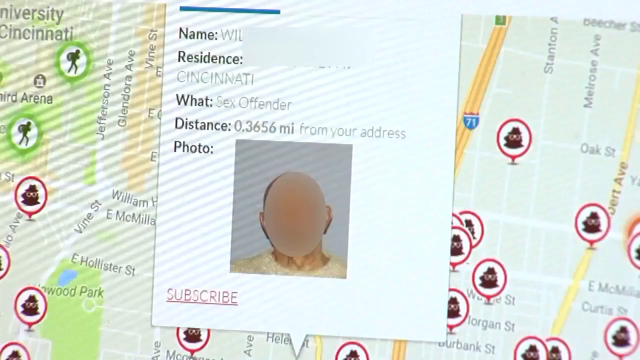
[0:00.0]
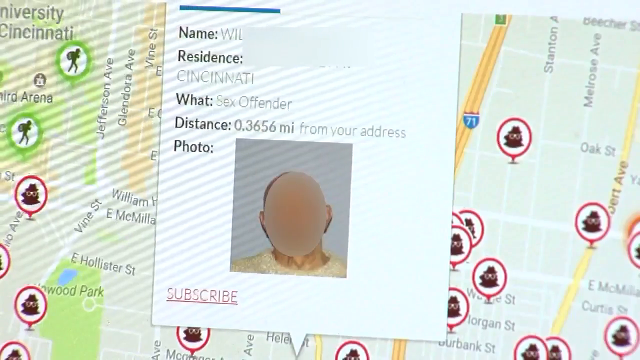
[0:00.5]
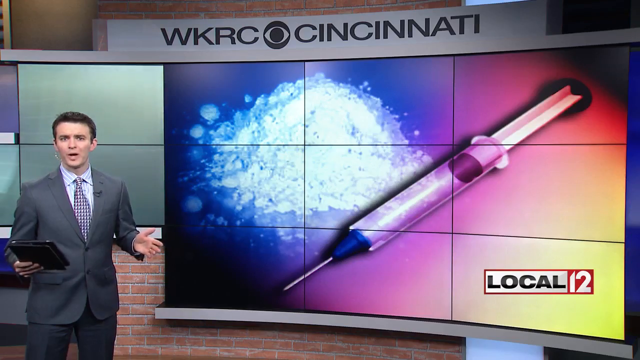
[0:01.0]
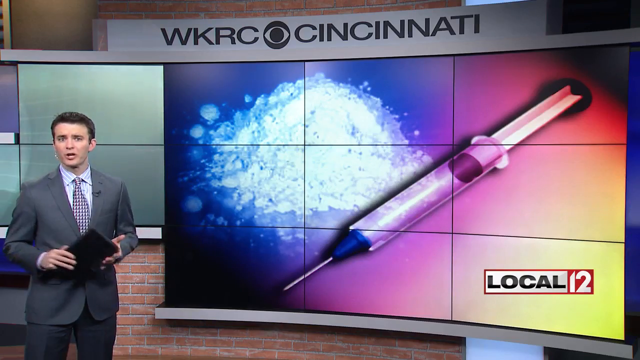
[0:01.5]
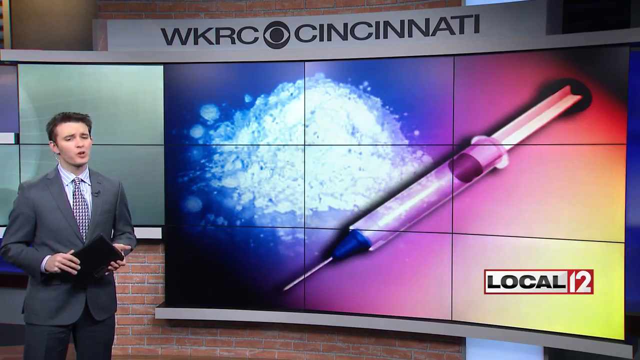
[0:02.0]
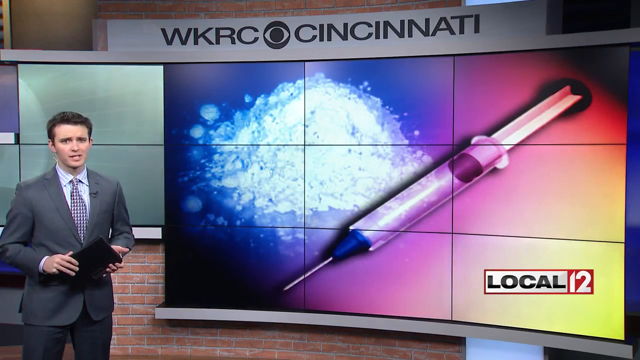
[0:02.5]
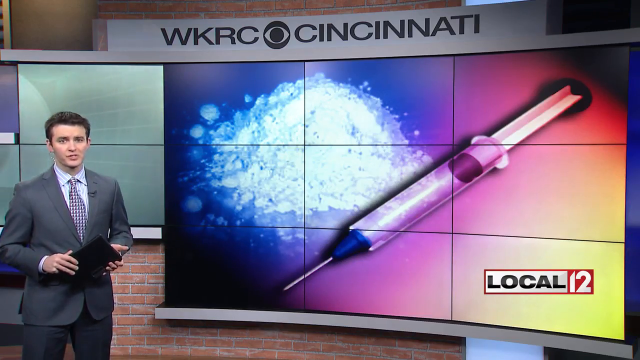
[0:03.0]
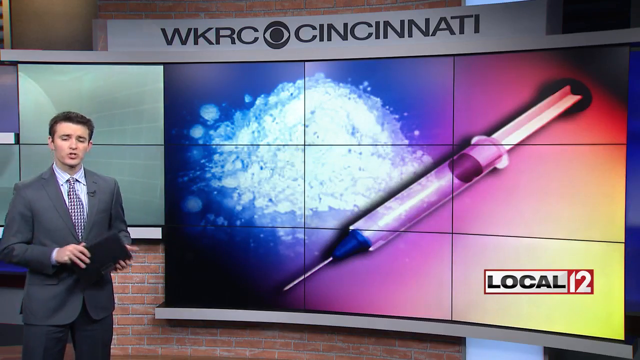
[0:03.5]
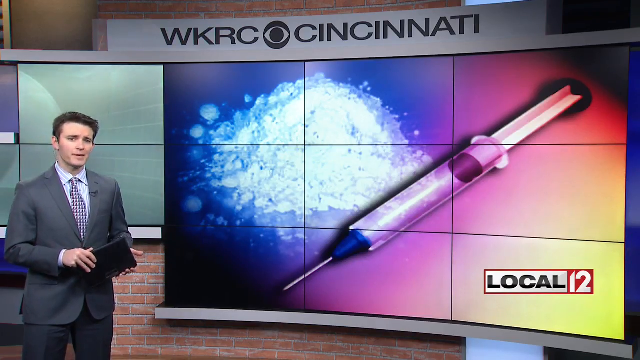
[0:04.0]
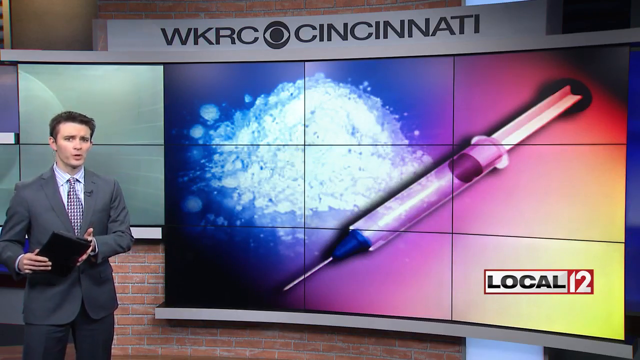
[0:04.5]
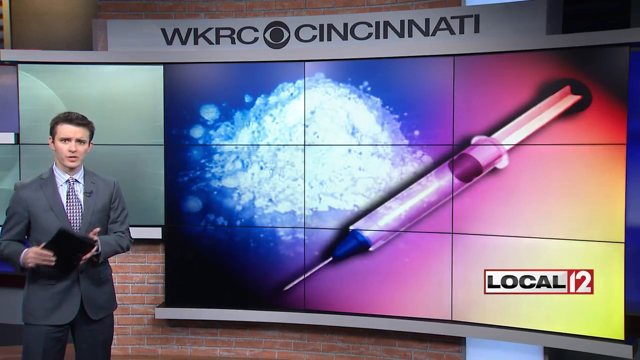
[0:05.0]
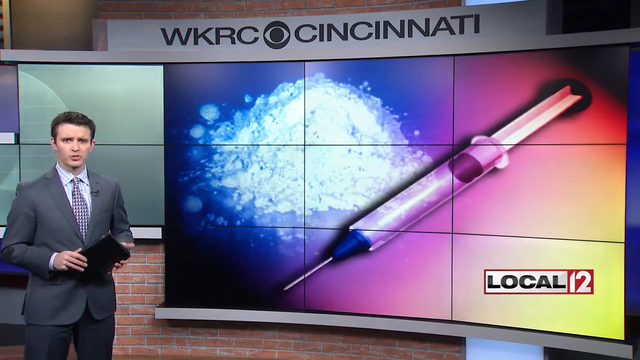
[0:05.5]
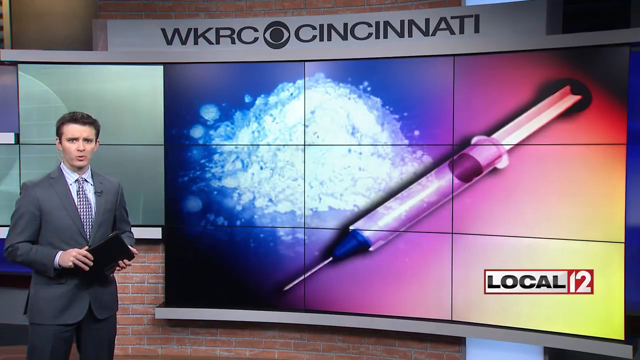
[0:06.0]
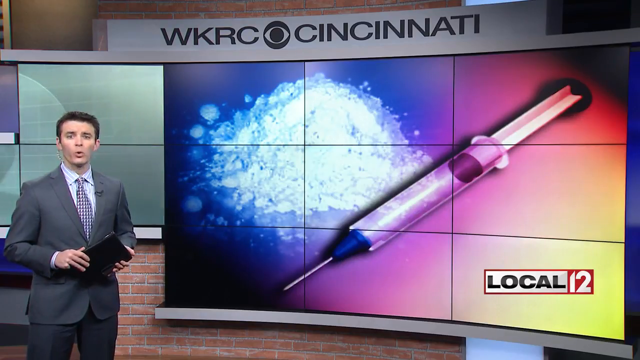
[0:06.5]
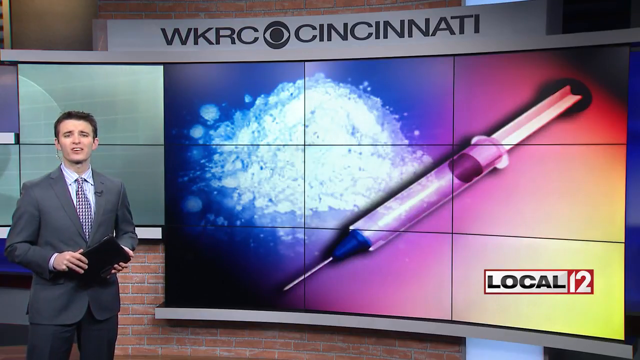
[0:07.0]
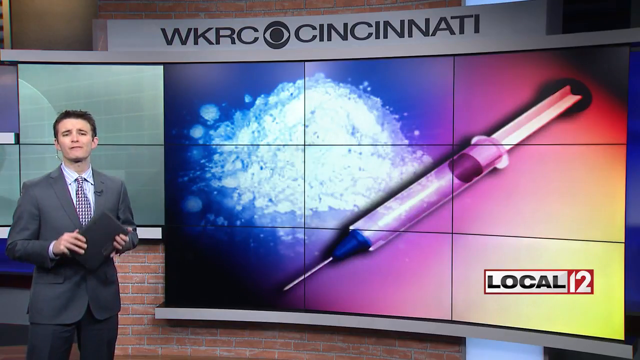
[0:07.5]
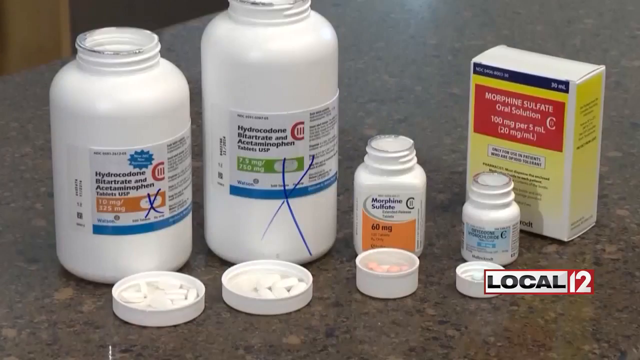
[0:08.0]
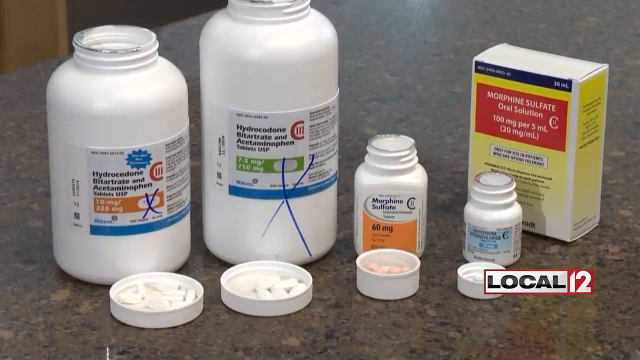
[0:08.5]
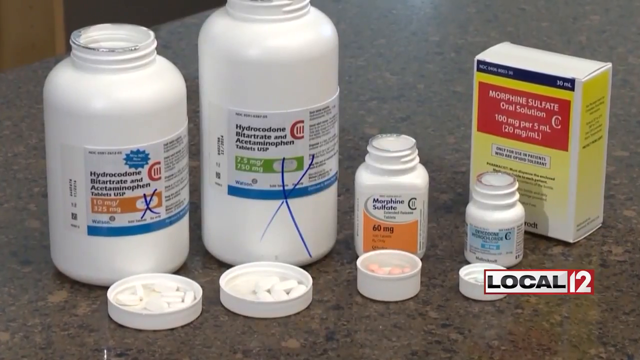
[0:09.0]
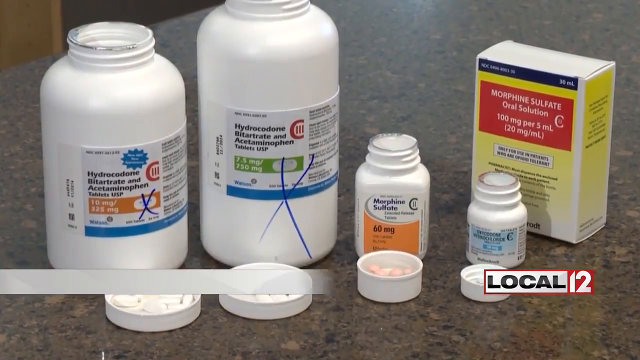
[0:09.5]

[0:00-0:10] A man wearing a black suit, a blue shirt and a tie appears on camera, holding something black. Behind him a screen shows a syringe, with the writing "WKRC" at the top and the words "local truth" on the lower side. A headline just below the screen reads "children and opioid". Later, bottles of medicine are shown, some of them marked with an X, and on the bottle top there are some drugs inside.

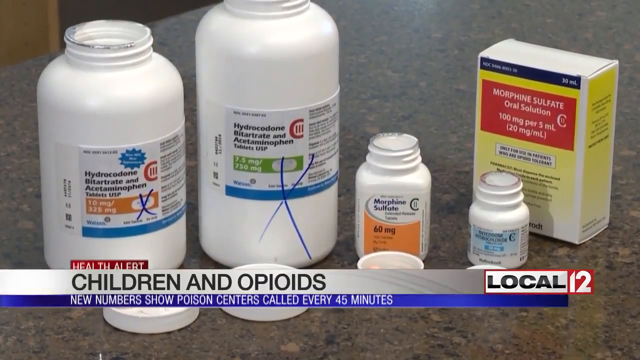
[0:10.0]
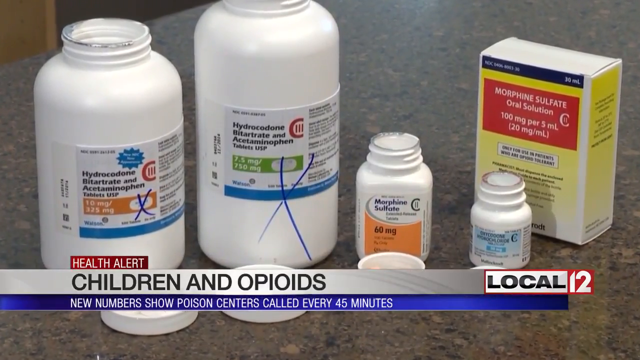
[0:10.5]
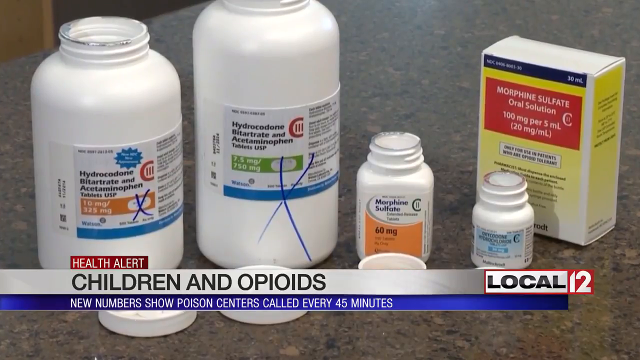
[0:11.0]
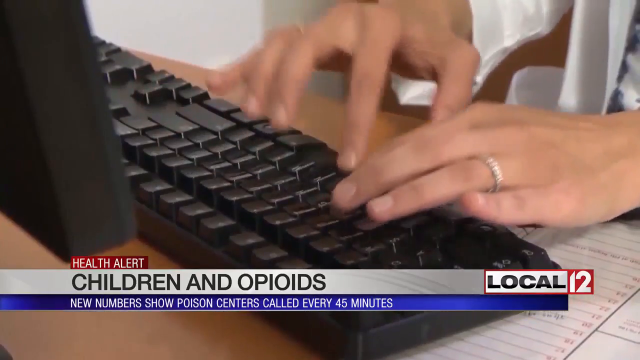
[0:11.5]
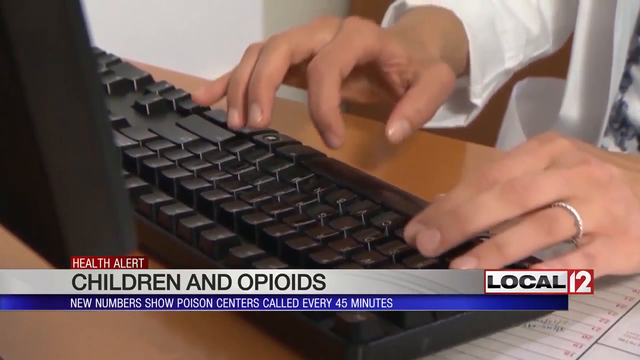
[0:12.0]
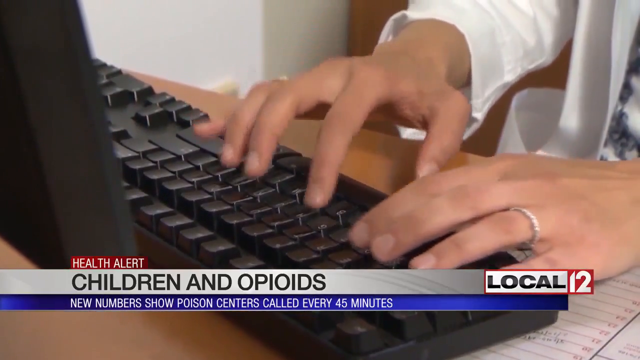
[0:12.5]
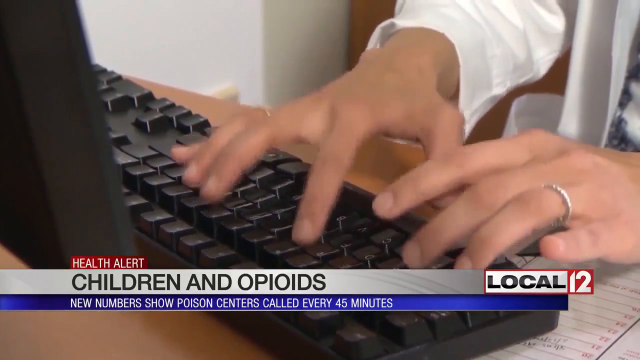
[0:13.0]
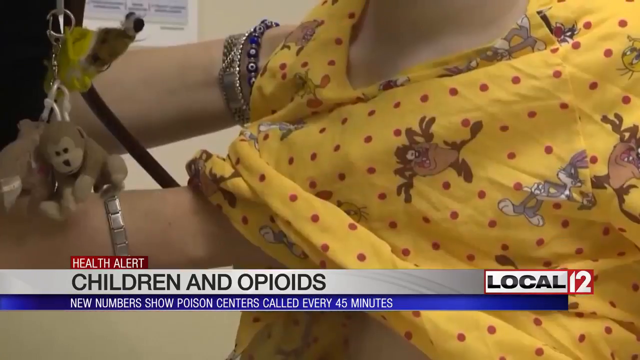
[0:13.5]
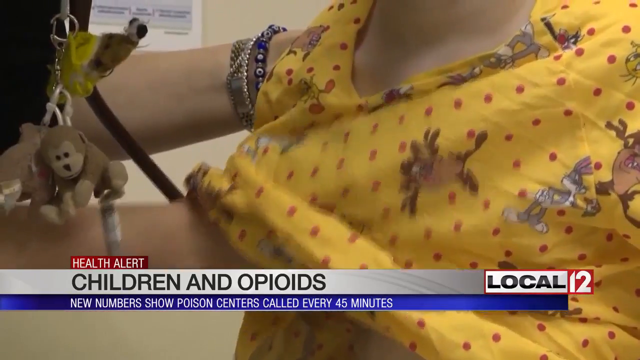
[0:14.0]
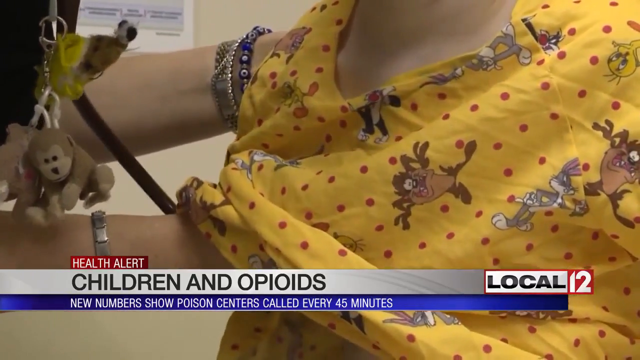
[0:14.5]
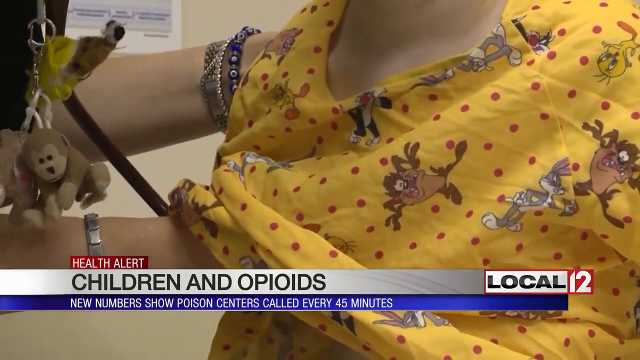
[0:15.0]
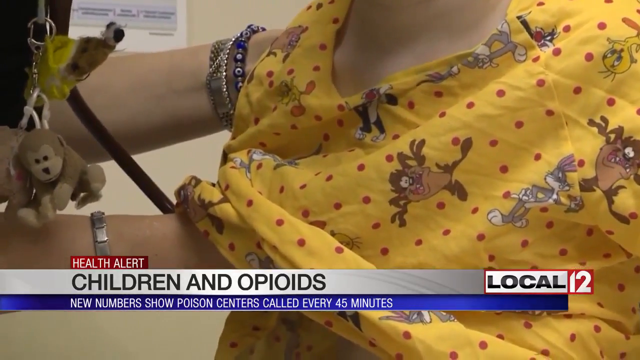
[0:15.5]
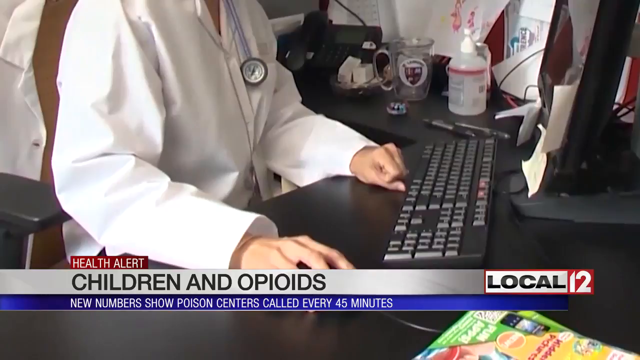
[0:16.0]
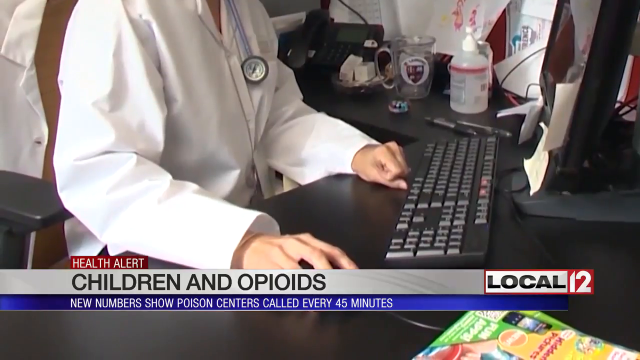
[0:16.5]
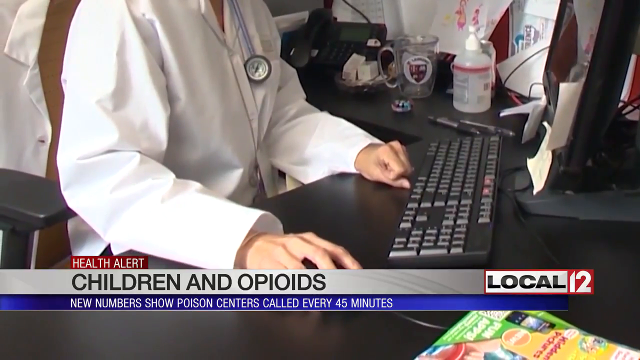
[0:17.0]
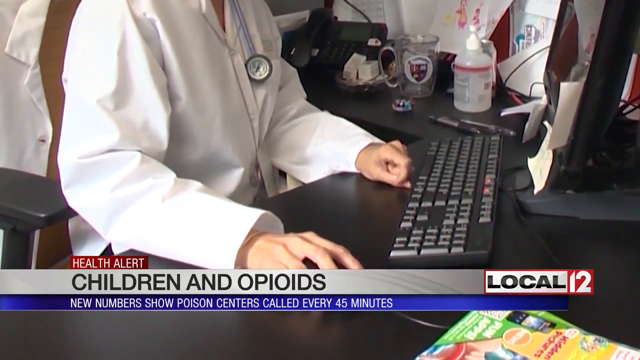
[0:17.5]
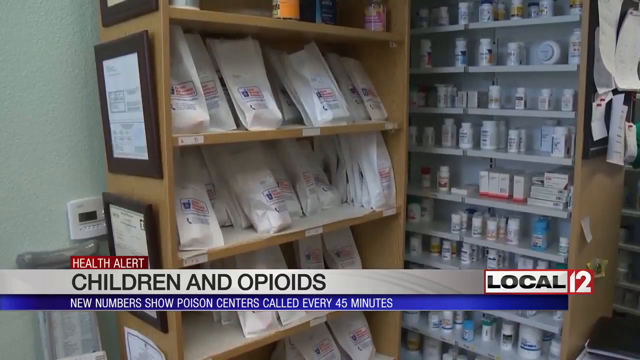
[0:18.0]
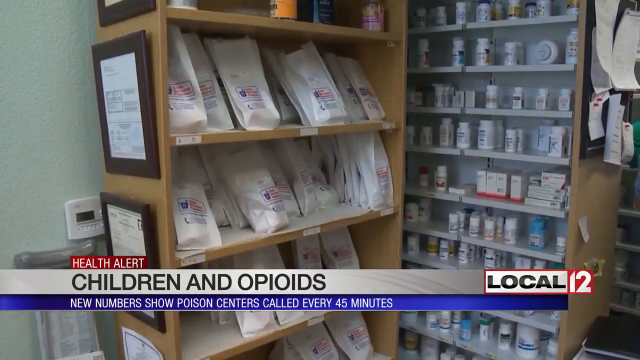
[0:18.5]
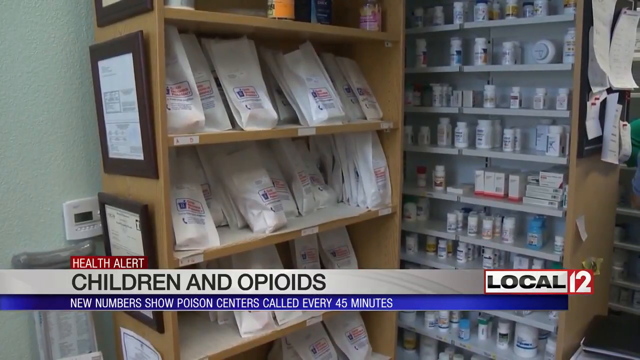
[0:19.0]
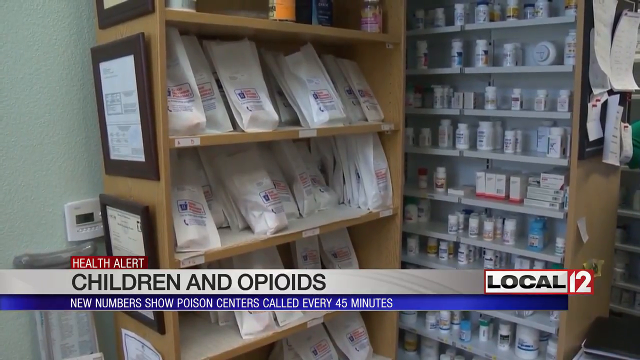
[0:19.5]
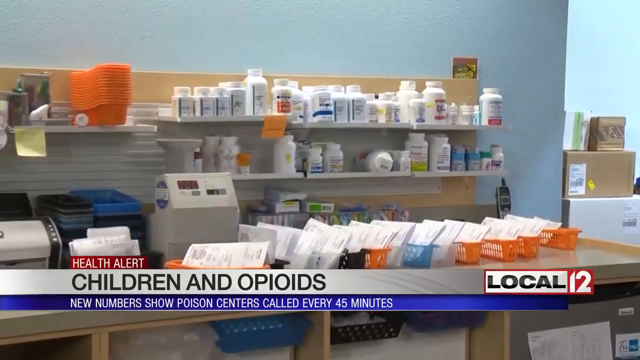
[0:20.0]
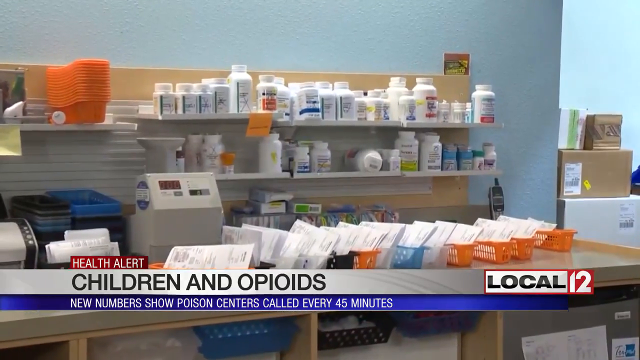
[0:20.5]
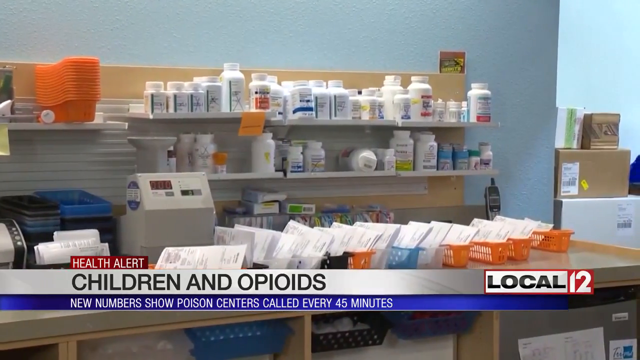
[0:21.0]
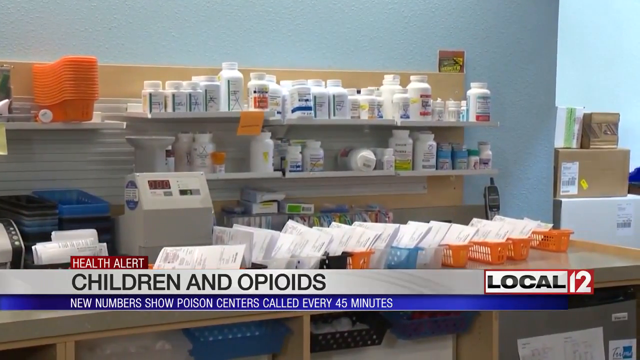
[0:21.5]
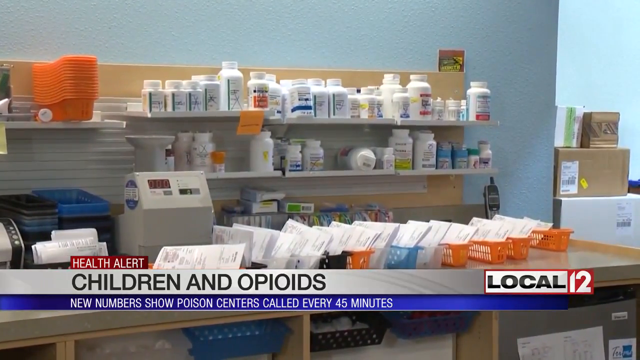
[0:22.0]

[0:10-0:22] The news headline reads "children and opioids", and just above it the words "health alert" appear in red. Someone is seen typing on a keyboard. A doctor in a white coat, with something around her neck, is shown with a keyboard in front of her. Next, a place where several drugs are arranged is shown. Someone in a dress that seems to be yellow also appears.